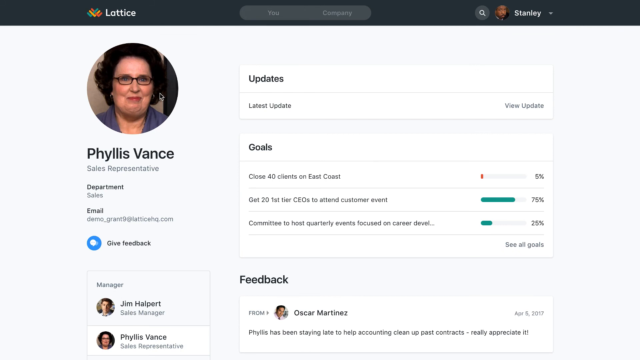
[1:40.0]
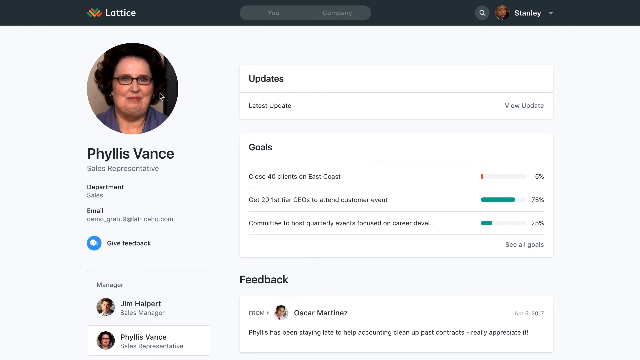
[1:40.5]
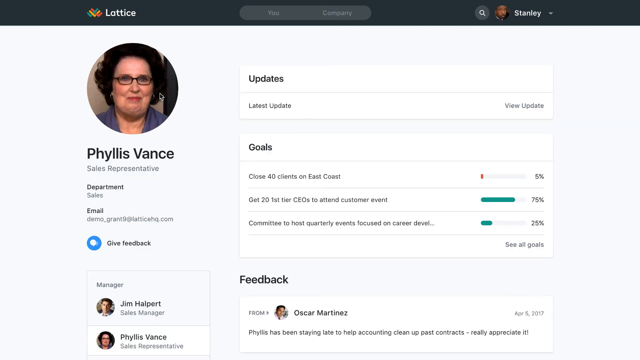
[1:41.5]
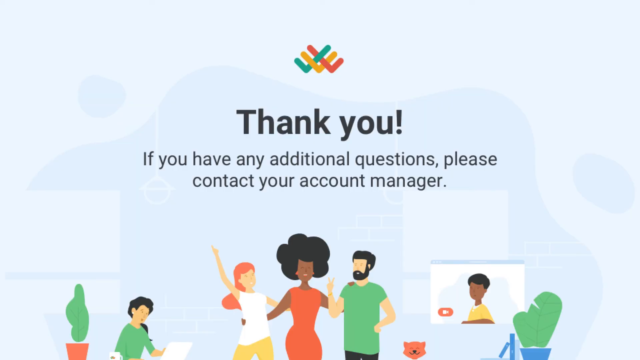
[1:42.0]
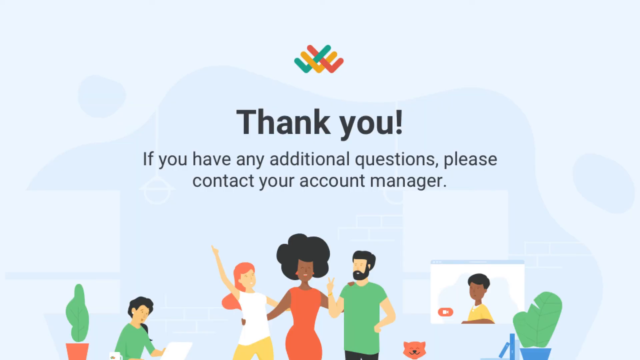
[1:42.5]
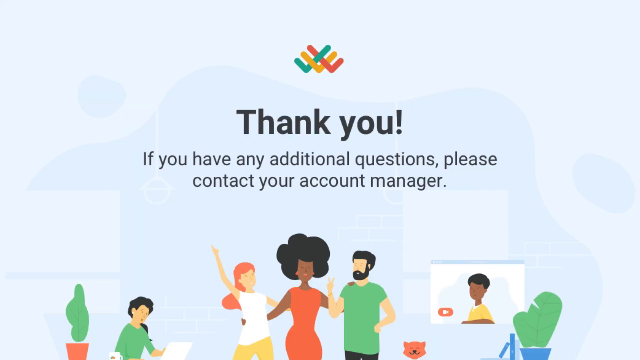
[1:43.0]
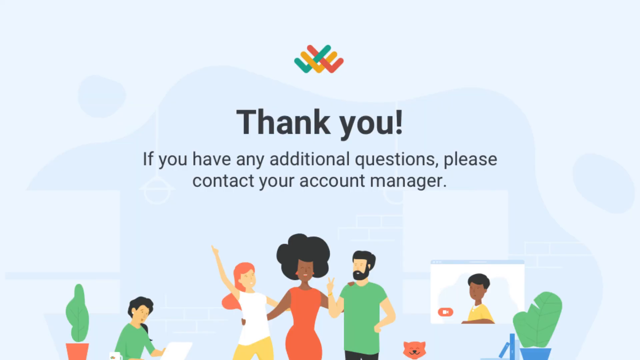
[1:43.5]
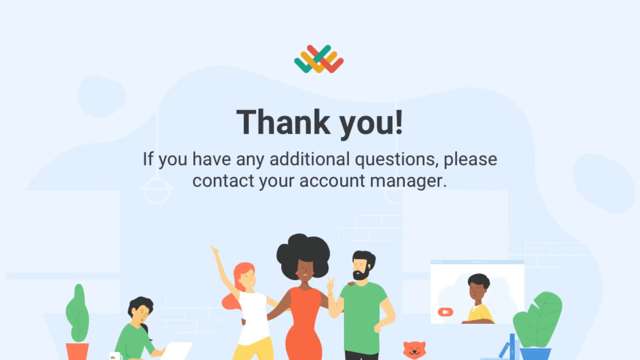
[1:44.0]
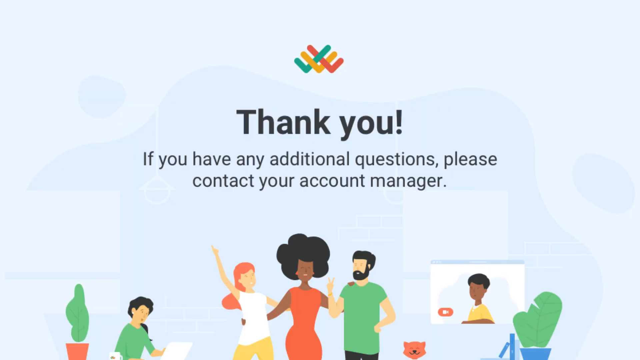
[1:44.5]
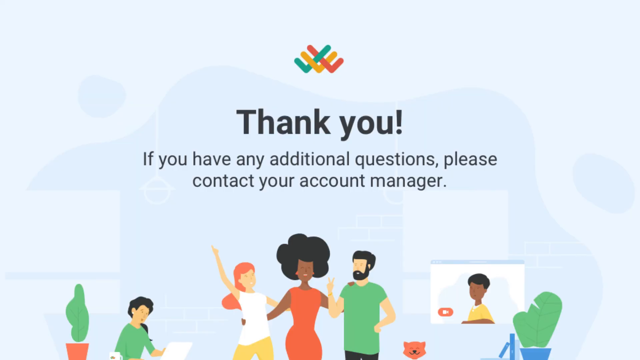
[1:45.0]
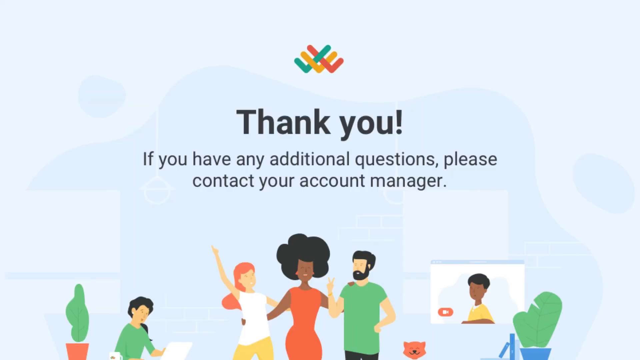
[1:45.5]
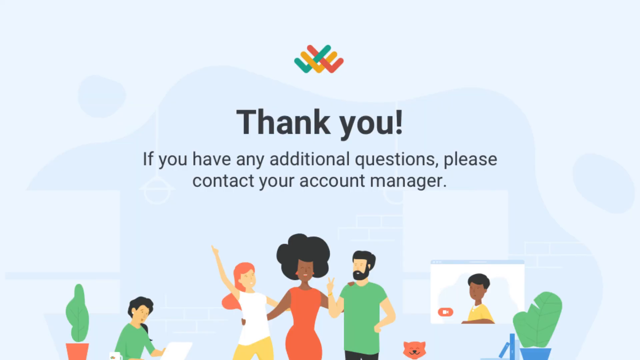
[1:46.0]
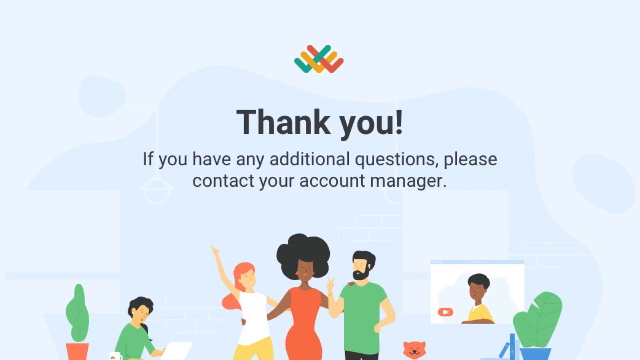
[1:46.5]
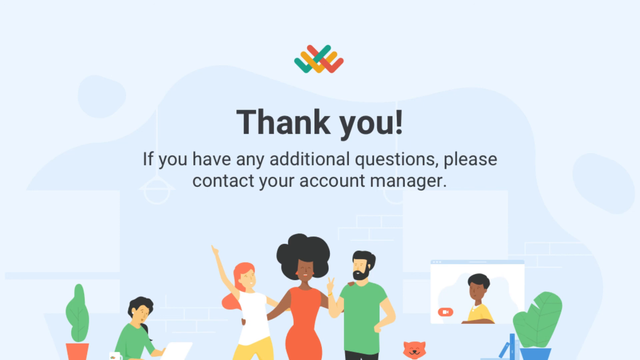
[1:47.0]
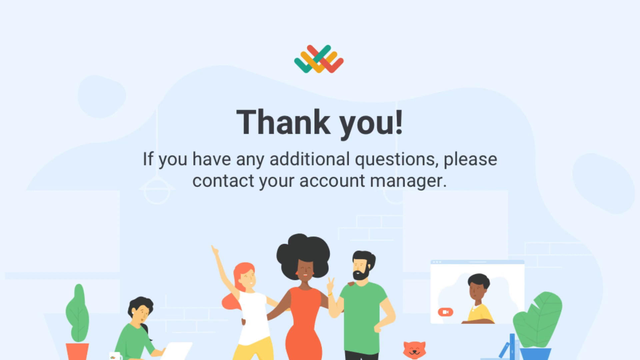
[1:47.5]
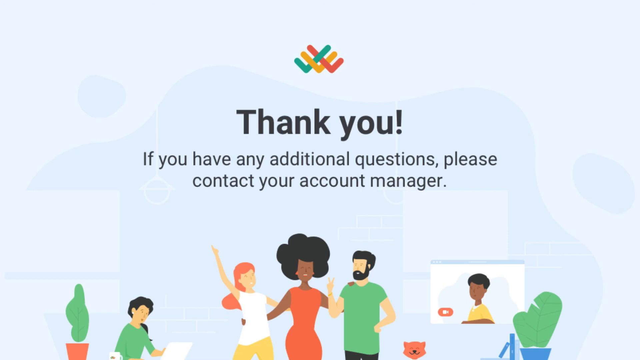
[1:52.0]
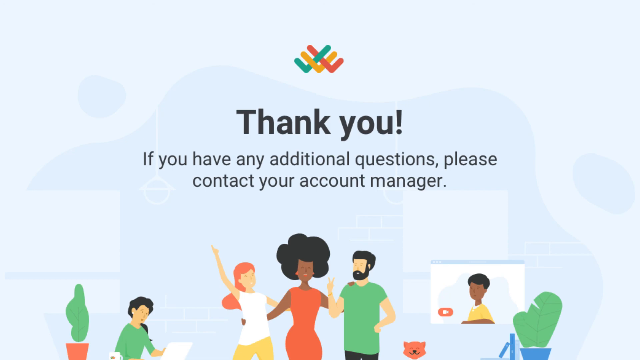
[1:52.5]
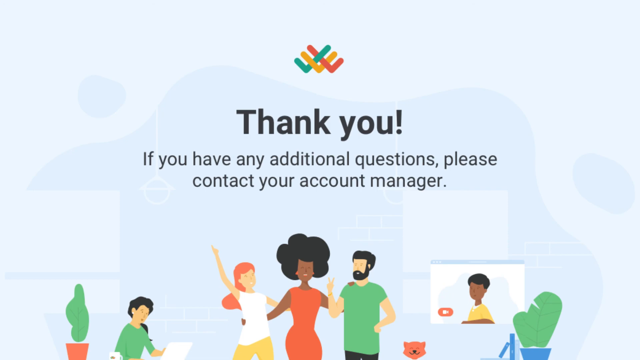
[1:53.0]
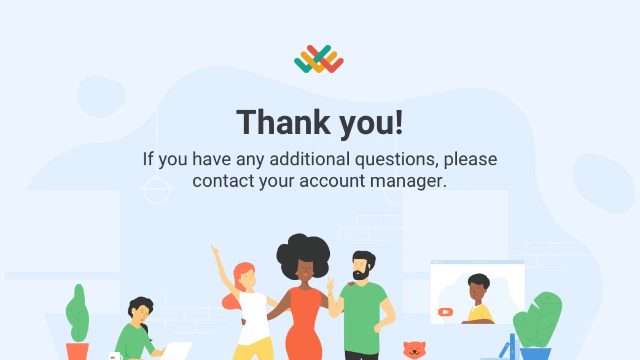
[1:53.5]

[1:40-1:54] Phyllis Vance's profile appears in the left column, stating she is a sales representative in the sales department. The profile then disappears and a screen that is no longer the software appears, seemingly the conclusion of the demo. The Lattice logo, in teal, orange and red, is centered at the top of the screen. Below it, black text reads "thank you! If you have any additional questions, please contact your account manager." Beneath the text are illustrations of characters: a woman in the middle wearing a dress has her arms around the people next to her; on the left a woman is sitting at a laptop next to a plant; on the right is what looks like a video screen on the wall with a picture of a person in it; and what looks like a small cat or bear sticks its head up to show its face.